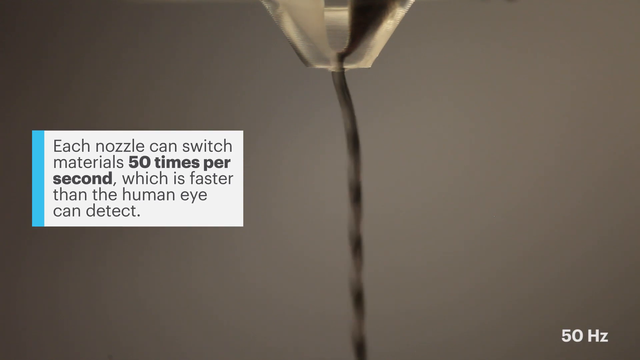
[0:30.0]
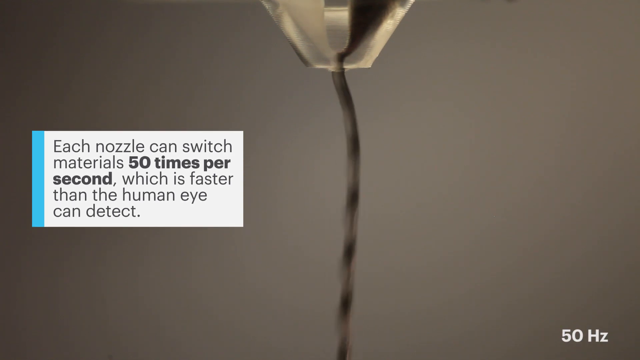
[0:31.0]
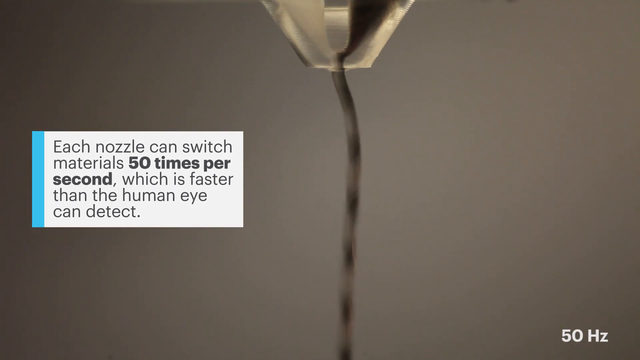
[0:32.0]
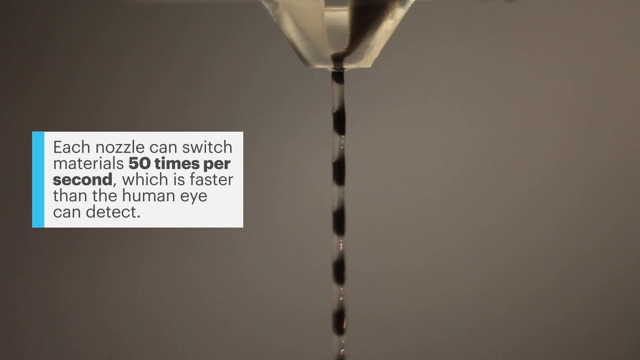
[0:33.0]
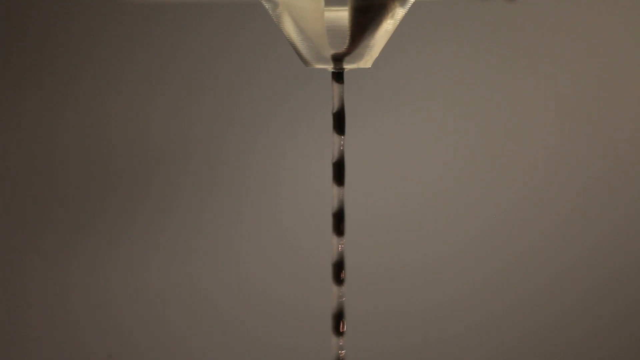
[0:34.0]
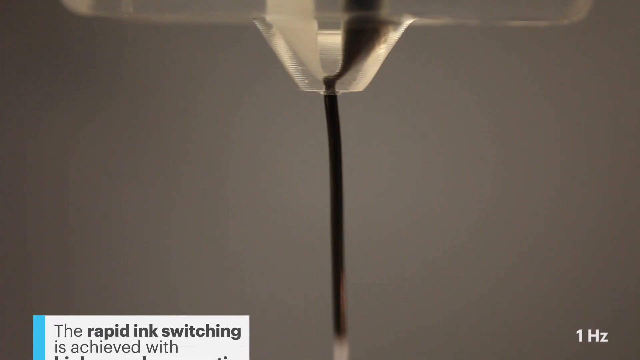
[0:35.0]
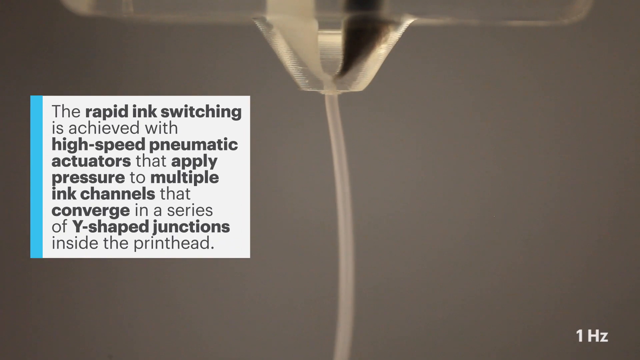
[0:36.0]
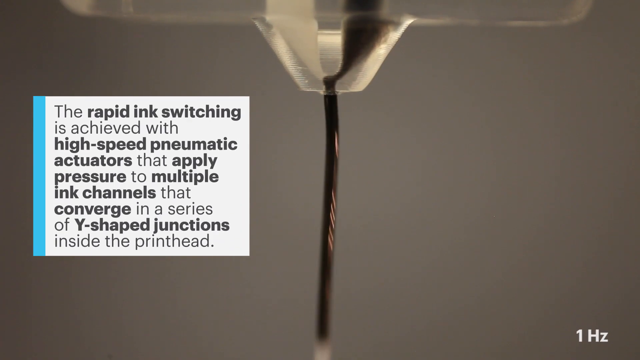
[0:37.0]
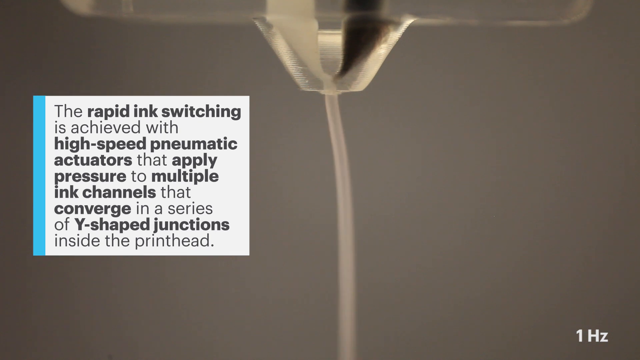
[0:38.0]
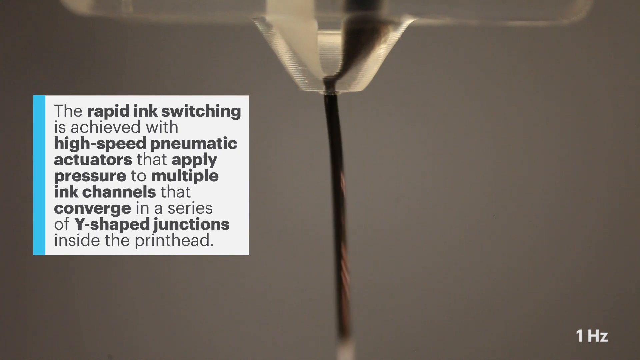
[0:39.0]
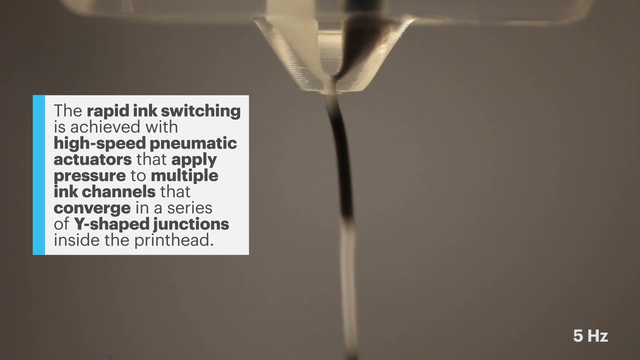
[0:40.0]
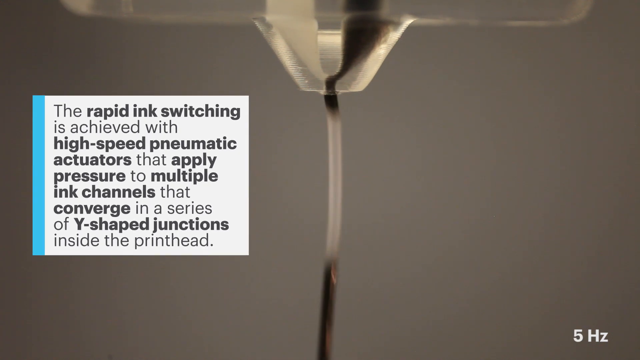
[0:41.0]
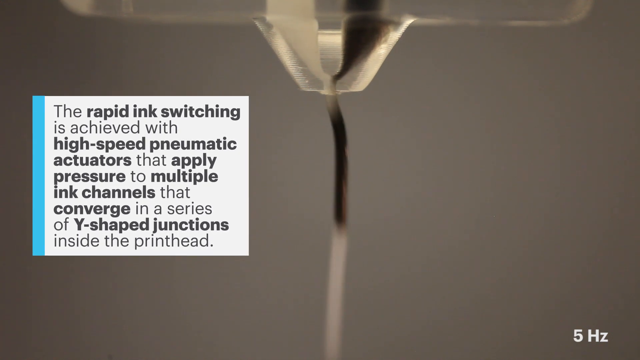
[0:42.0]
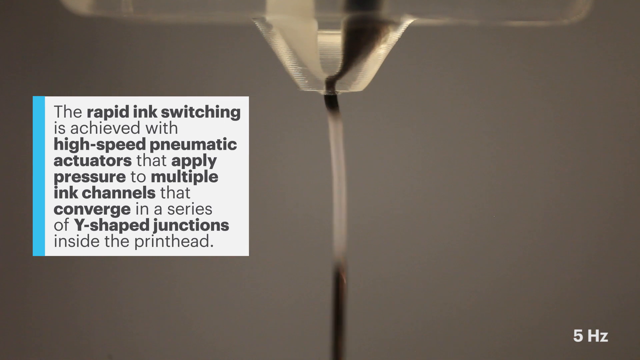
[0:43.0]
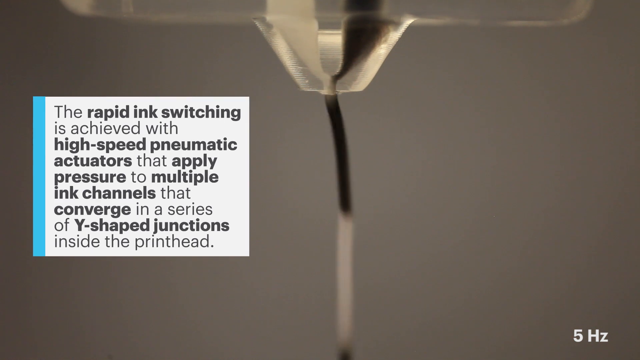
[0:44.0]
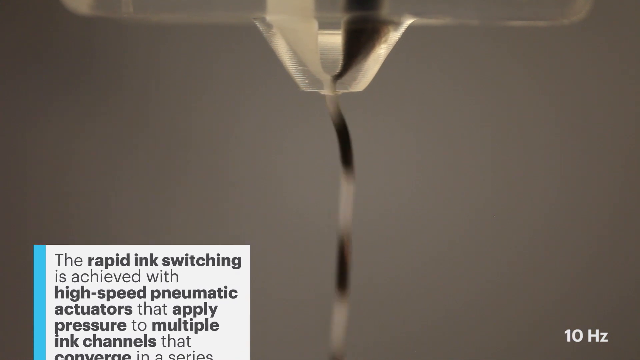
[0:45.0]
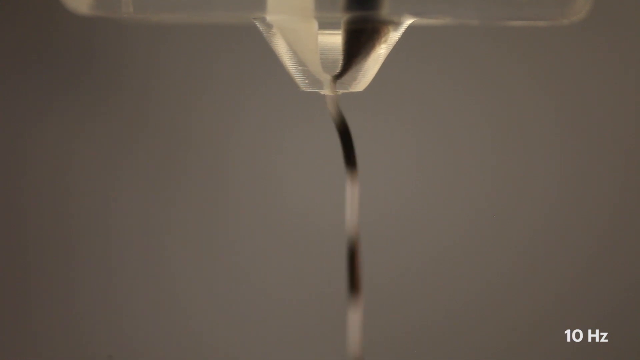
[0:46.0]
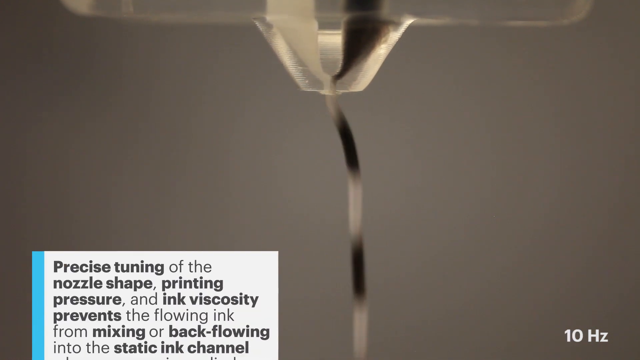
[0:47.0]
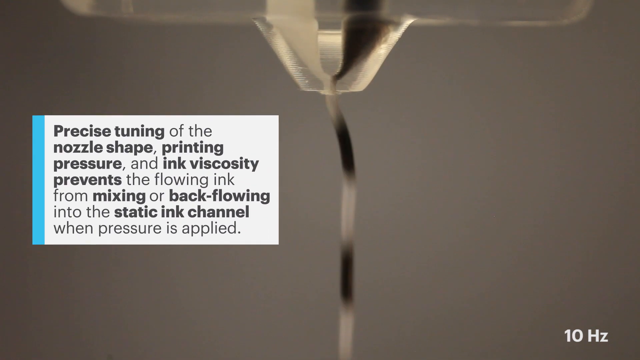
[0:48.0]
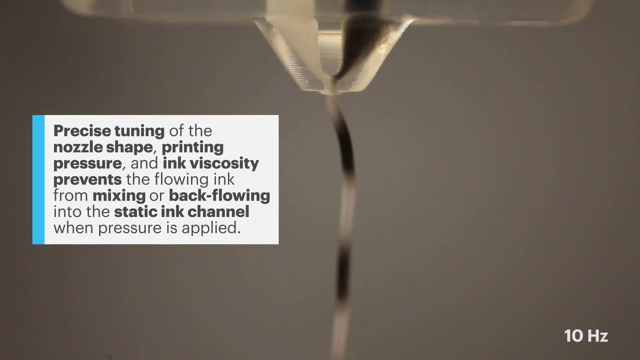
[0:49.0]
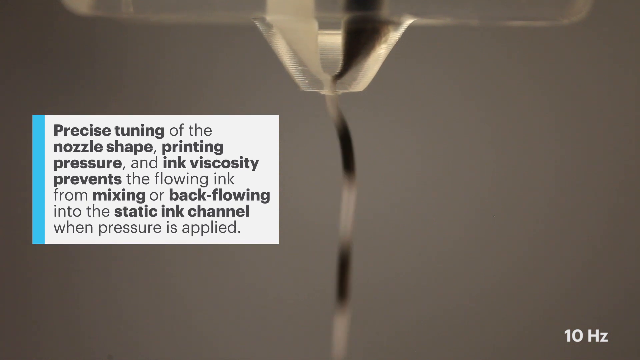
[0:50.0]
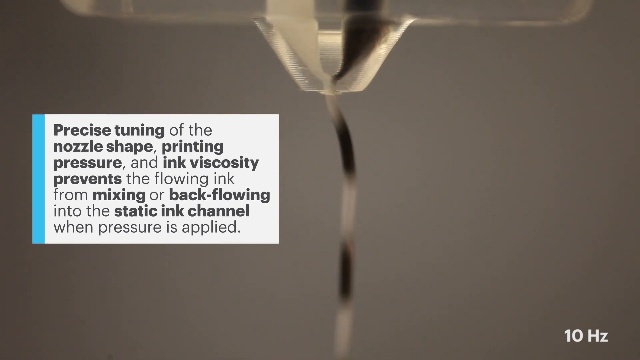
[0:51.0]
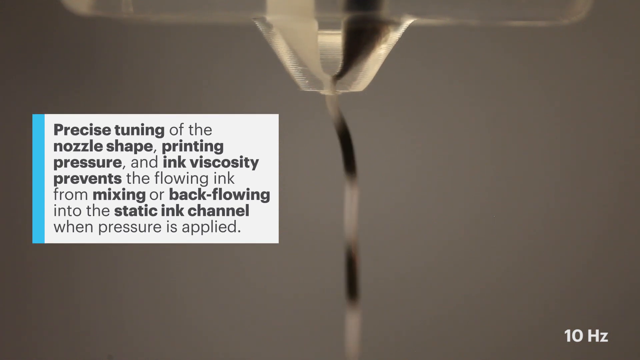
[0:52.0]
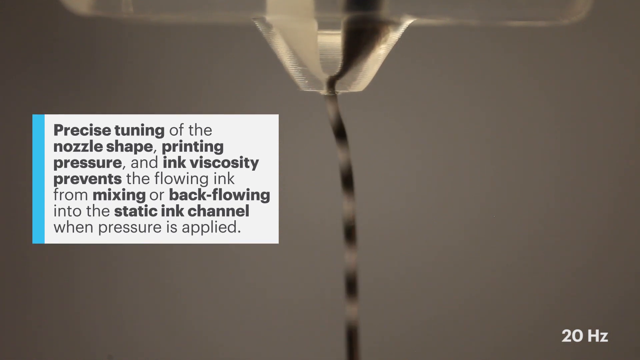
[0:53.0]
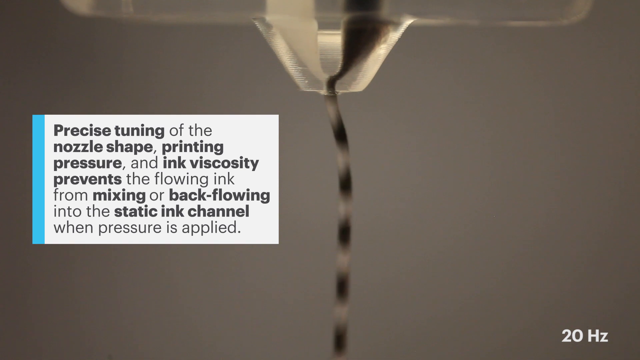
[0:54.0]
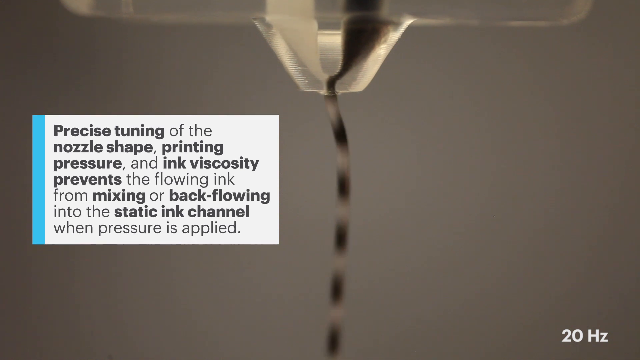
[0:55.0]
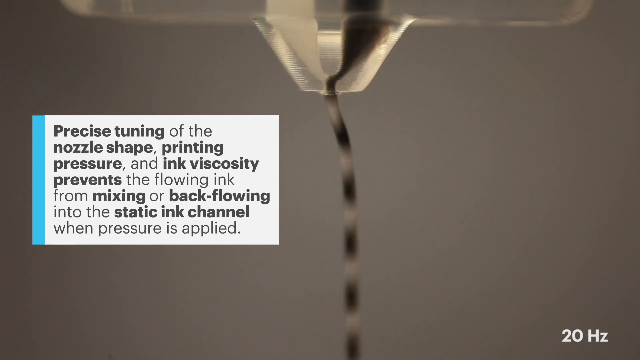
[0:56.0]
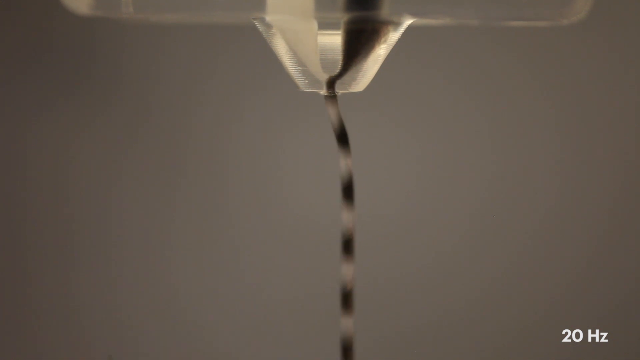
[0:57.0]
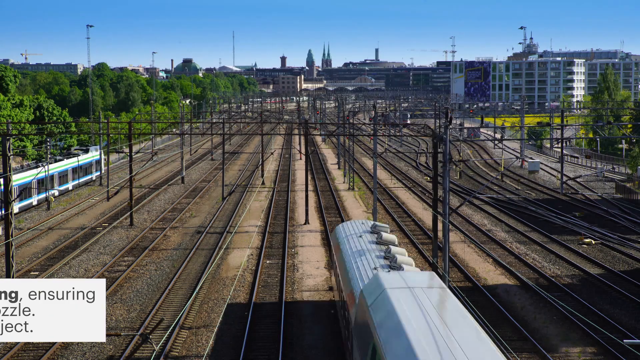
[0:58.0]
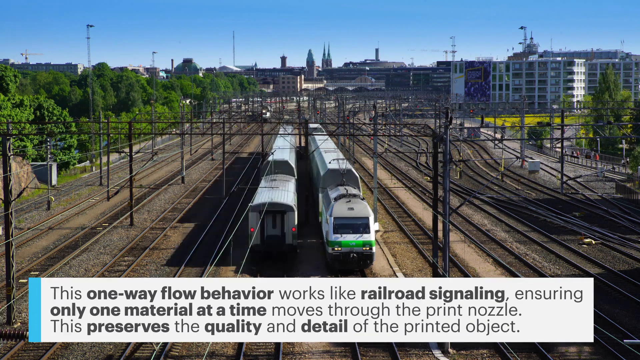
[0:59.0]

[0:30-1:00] The focus stays on the nozzle. It comes to a temporary stop and then switches to a new ink. Text explains that the rapid ink switching is achieved with high-speed pneumatic actuators that apply pressure to multiple ink channels converging in a series of Y-shaped junctions inside the printhead, while the inks visibly shift back and forth between black and white. Further text states that precise tuning of the nozzle shape, printing pressure and ink viscosity prevents the flowing ink from mixing or backflowing into the static ink channel when pressure is applied. The scene then changes to a railway line with probably eight to ten tracks laid out alongside one another in a very built-up area. Churches are visible in the distance, along with a sort of city hall tower; the city could possibly be Berlin. The railway serves as an analogy: text states that the one-way flow behaviour works like railroad signalling, ensuring only one material at a time moves through the print nozzle, which preserves the quality and detail of the printed object.